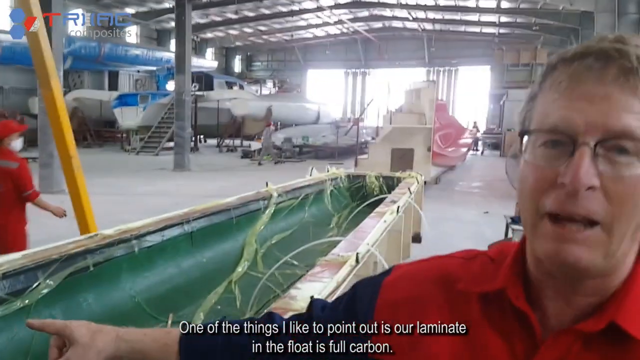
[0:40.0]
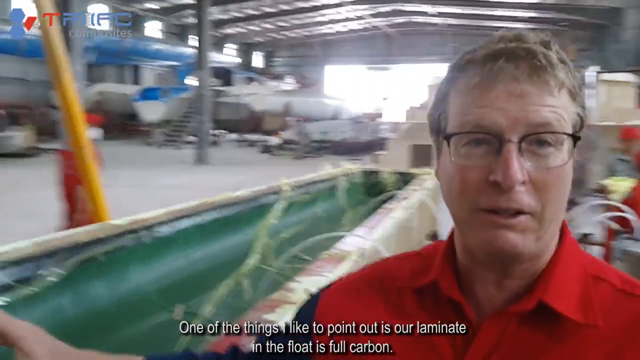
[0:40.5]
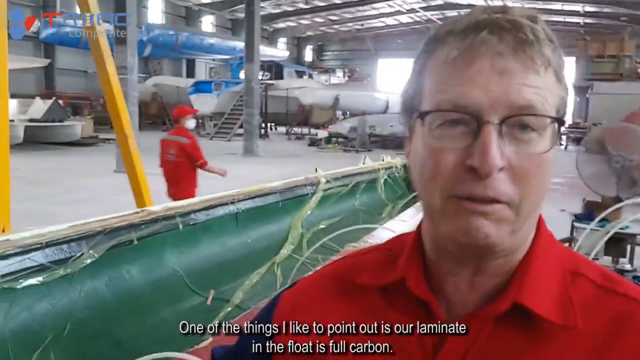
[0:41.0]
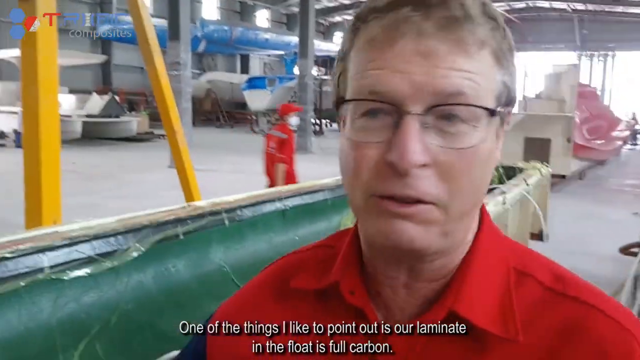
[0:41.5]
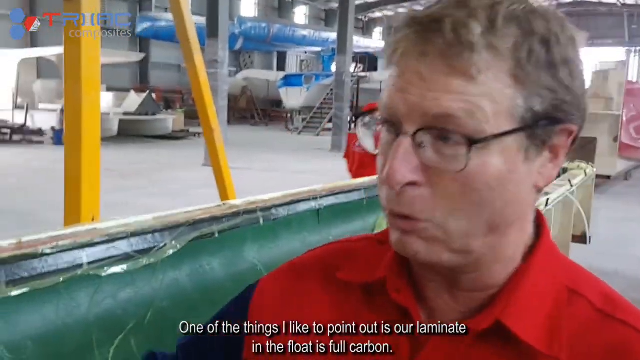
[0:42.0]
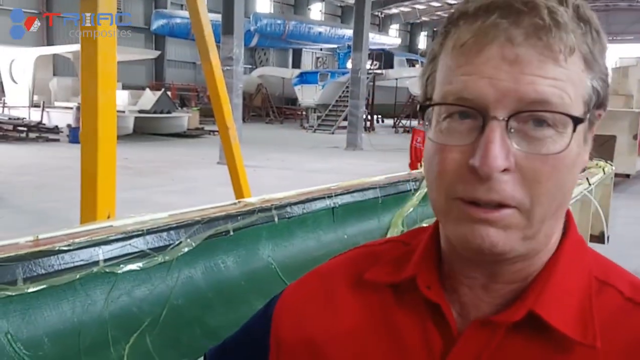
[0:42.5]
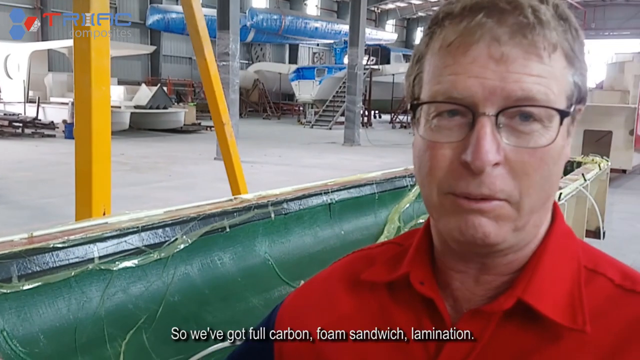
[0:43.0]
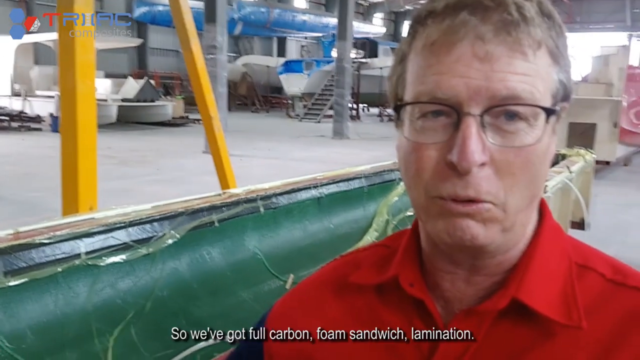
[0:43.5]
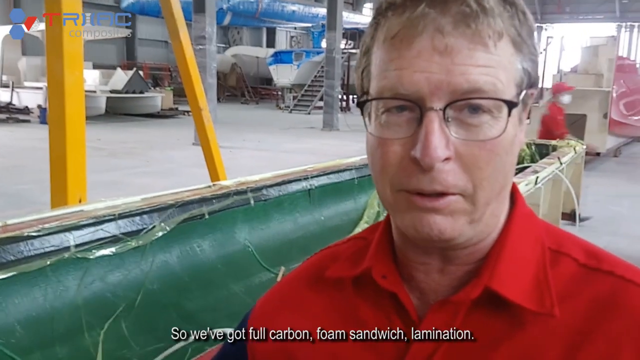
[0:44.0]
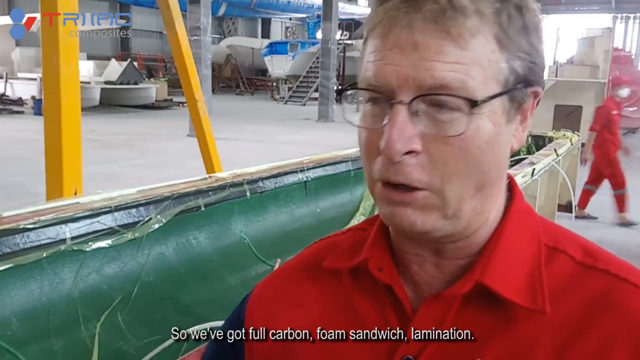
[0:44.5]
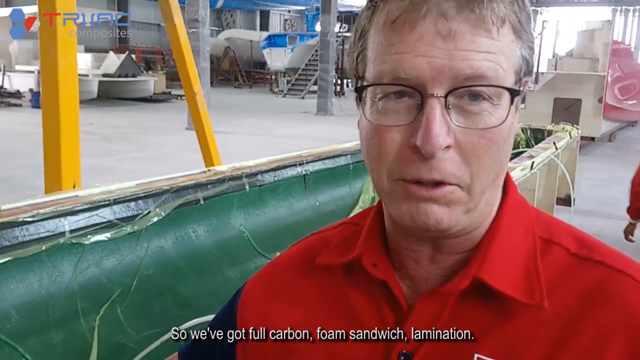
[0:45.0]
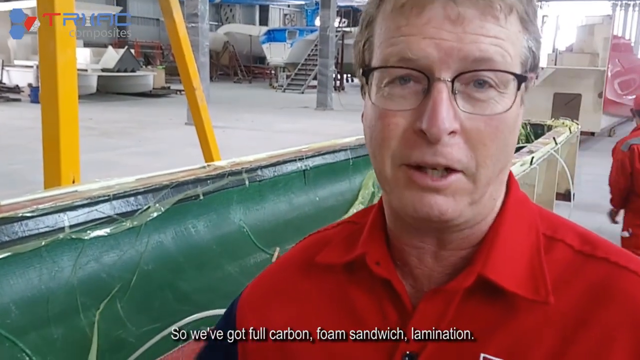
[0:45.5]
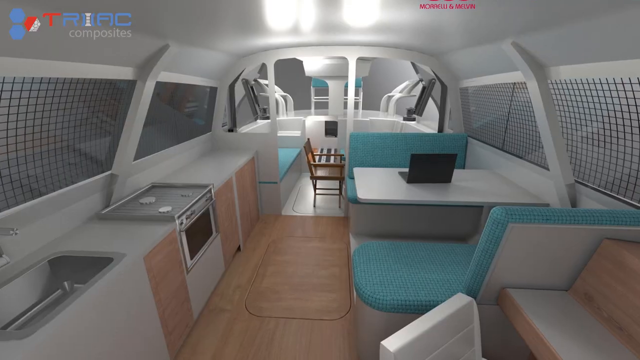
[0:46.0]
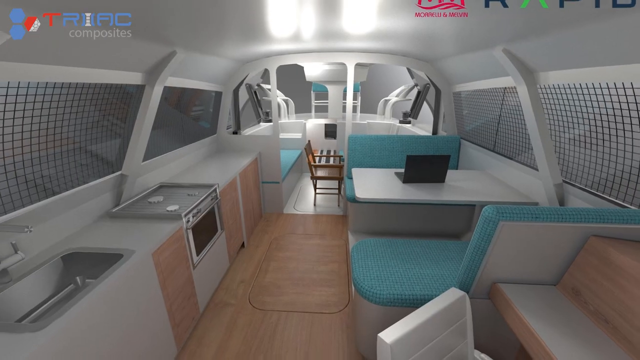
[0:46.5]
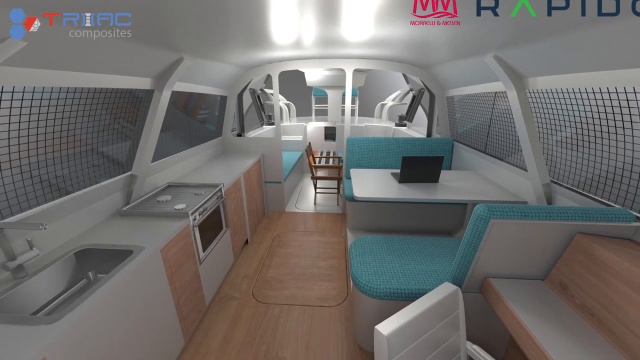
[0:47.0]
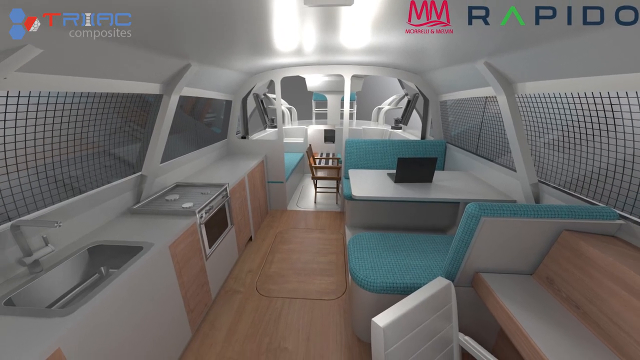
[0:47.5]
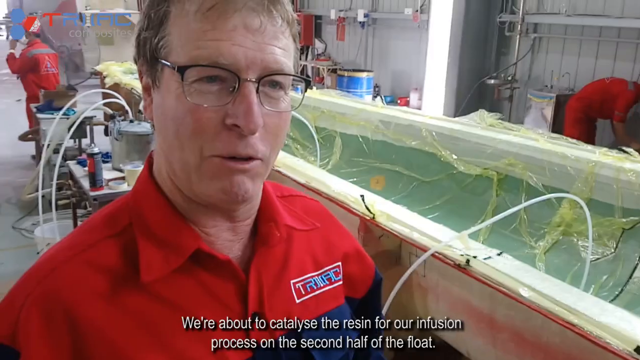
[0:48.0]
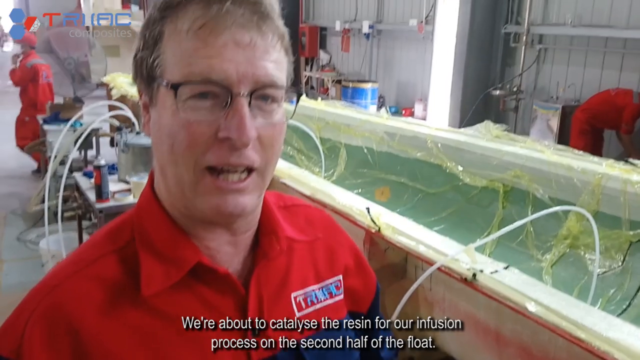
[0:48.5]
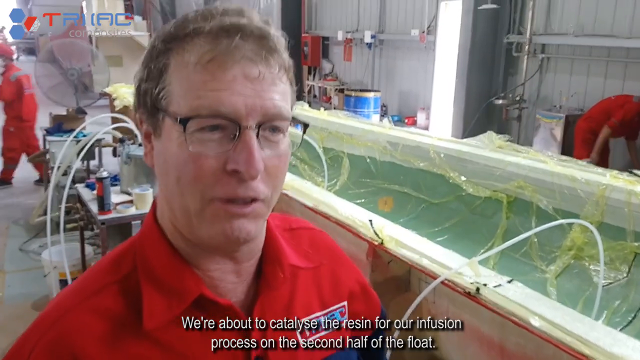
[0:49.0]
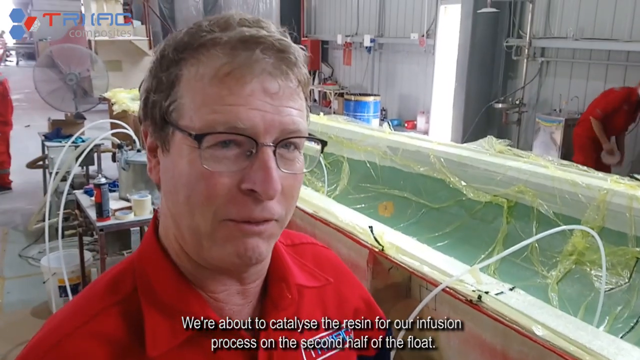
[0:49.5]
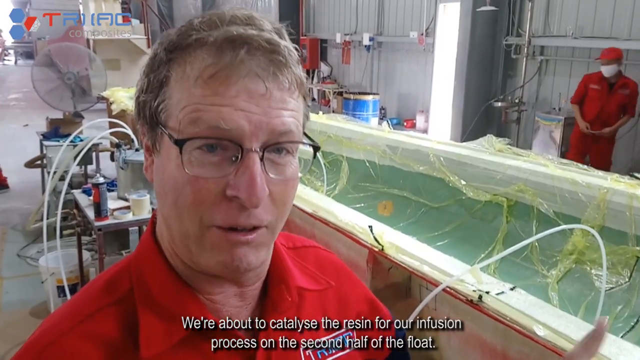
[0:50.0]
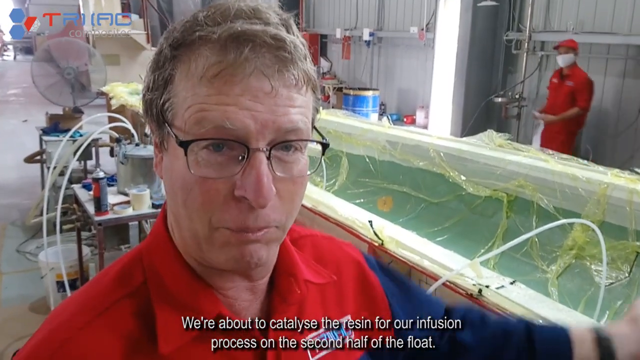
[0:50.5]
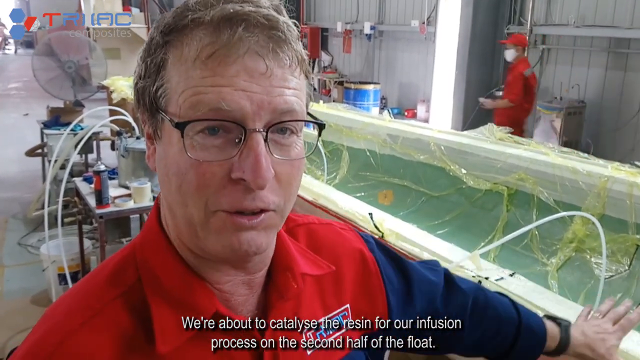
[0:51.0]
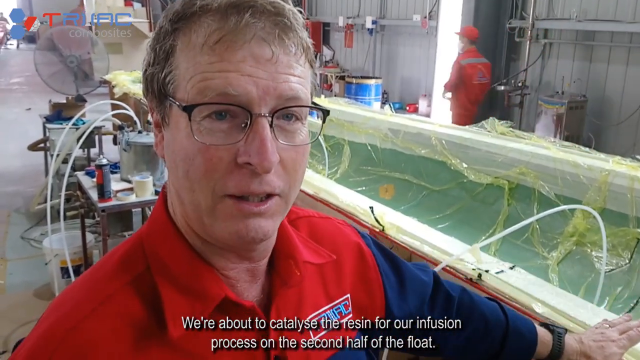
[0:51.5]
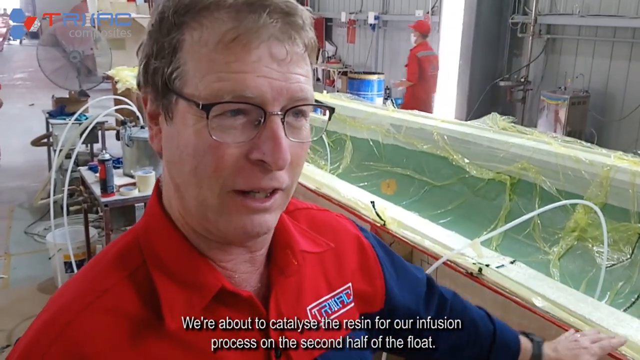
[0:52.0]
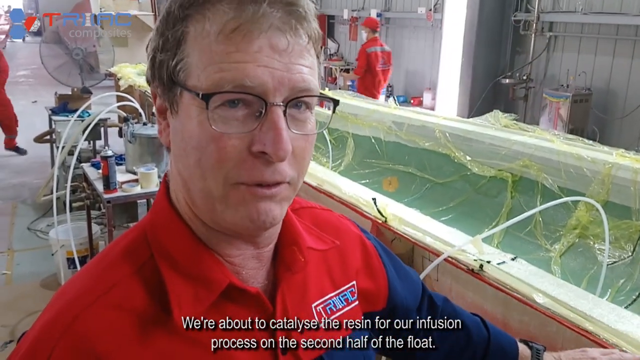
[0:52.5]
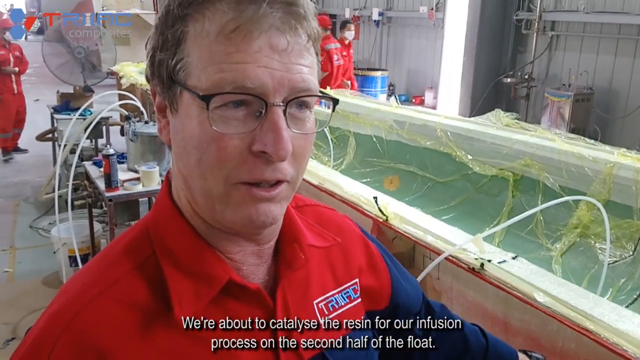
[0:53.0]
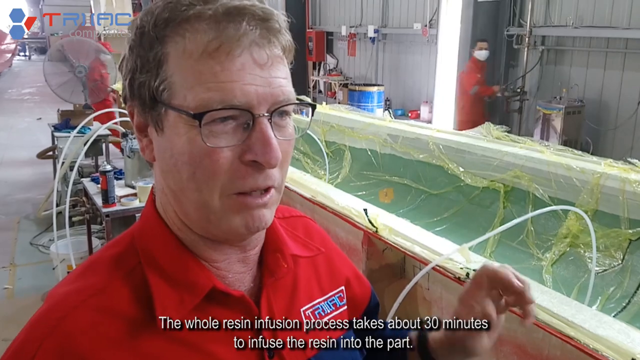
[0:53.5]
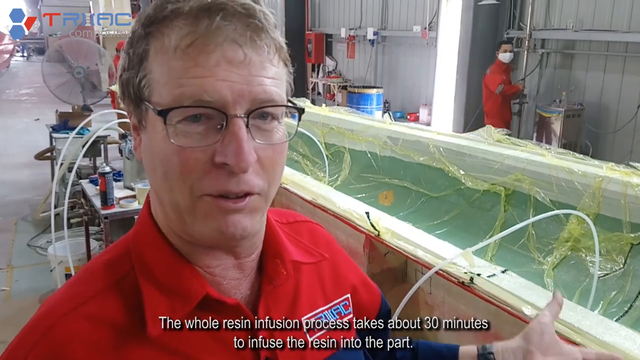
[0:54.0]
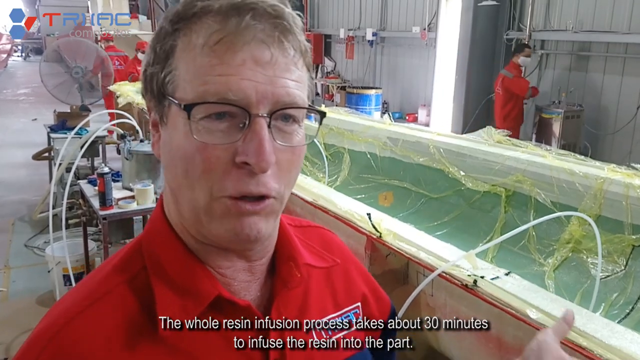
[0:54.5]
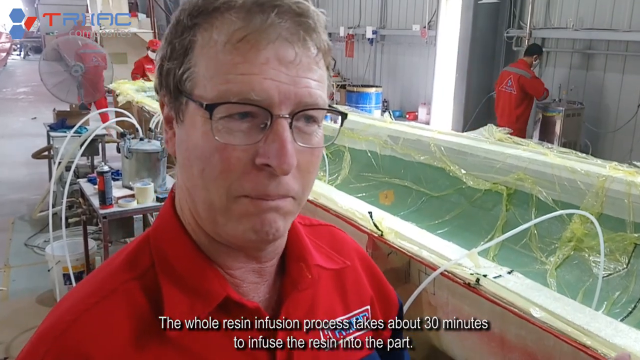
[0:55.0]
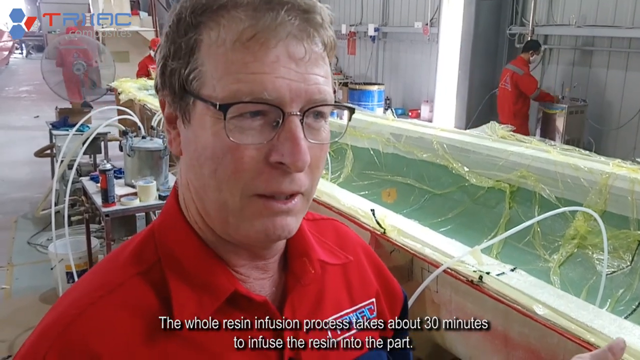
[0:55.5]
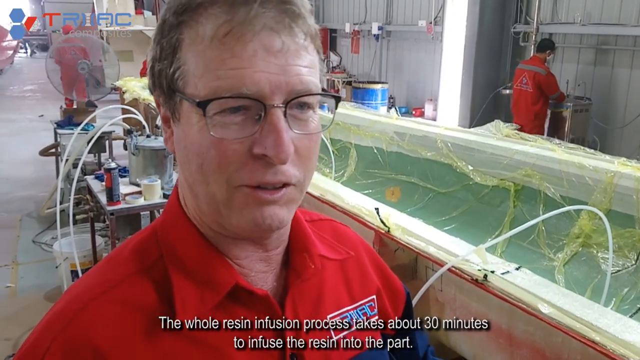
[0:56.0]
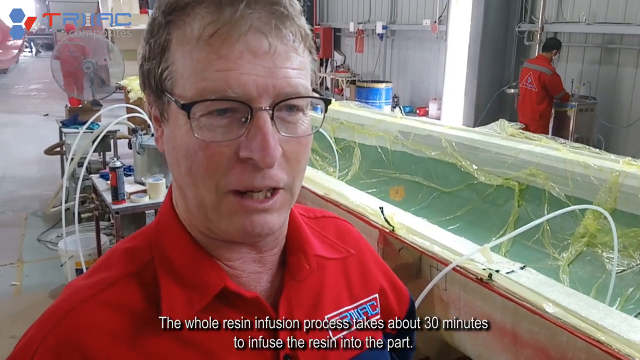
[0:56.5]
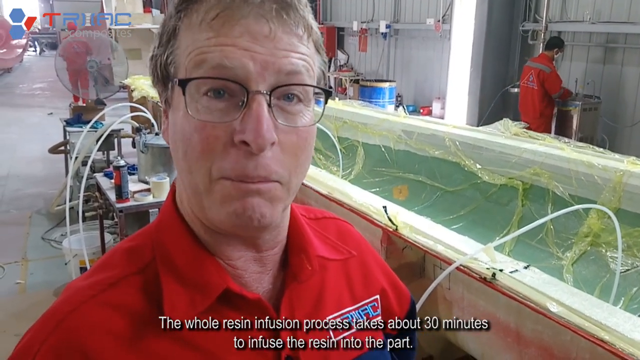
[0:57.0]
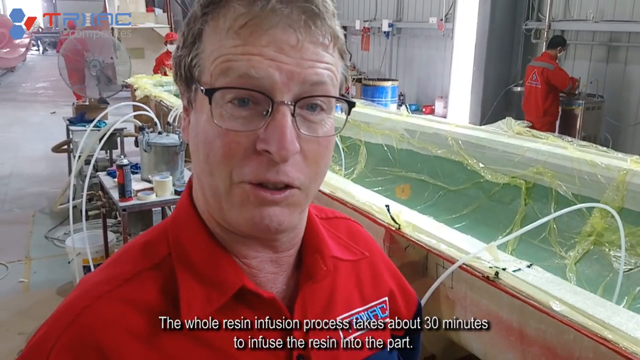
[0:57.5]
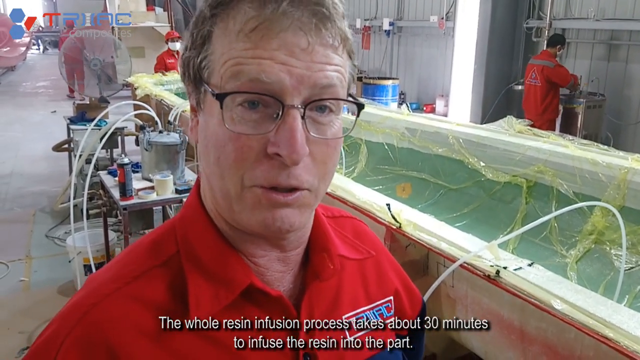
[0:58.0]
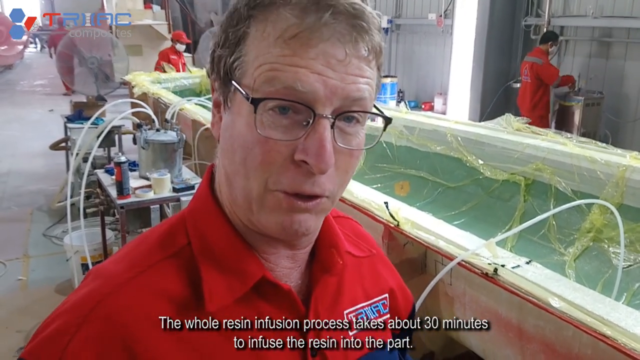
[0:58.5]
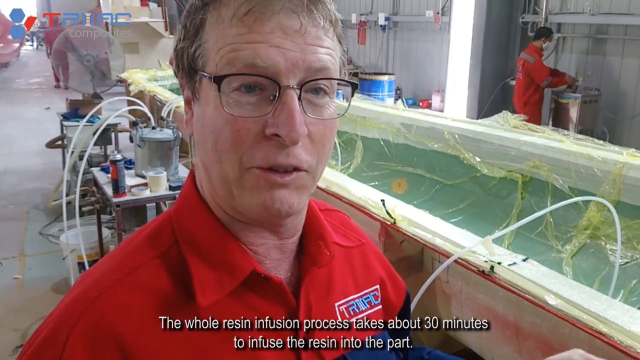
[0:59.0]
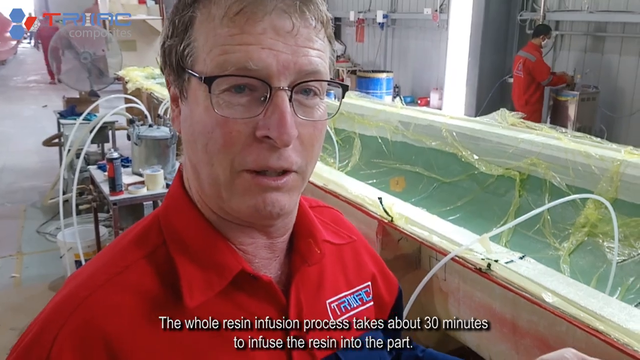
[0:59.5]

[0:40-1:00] Mark Waller is shown talking, and a glimpse is given of an AI photo representation of what is presumably the interior of the Rapido before the video returns to Mark Waller. The interior of the factory is still shown, with many factory workers walking around and assembling equipment, and in the background there apparently is a Rapido being assembled.